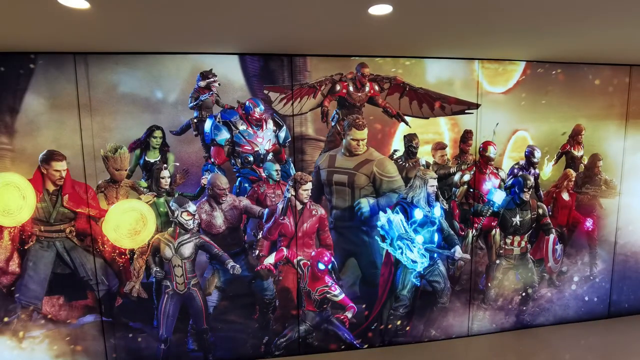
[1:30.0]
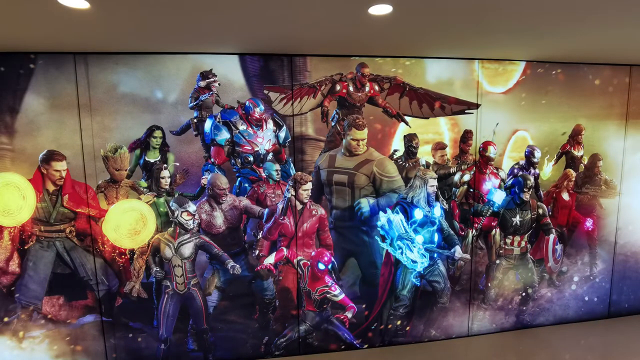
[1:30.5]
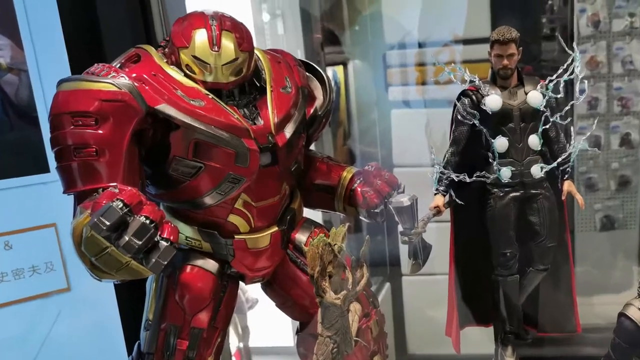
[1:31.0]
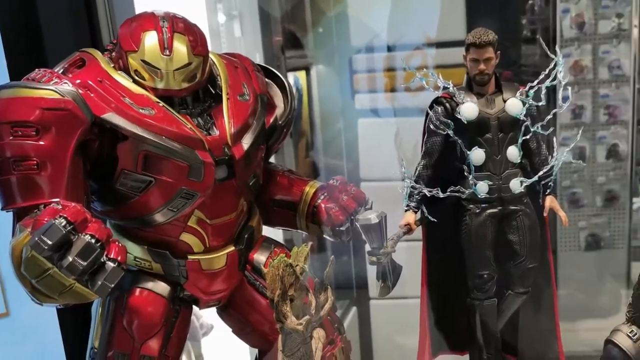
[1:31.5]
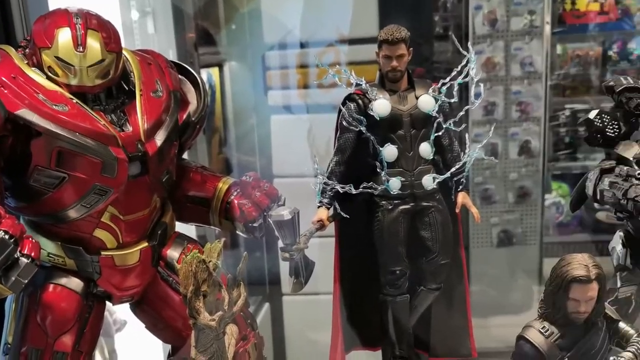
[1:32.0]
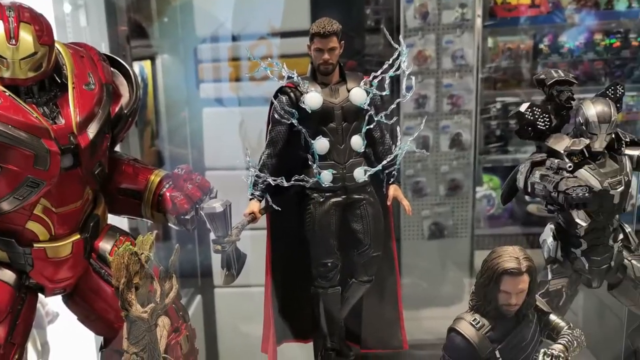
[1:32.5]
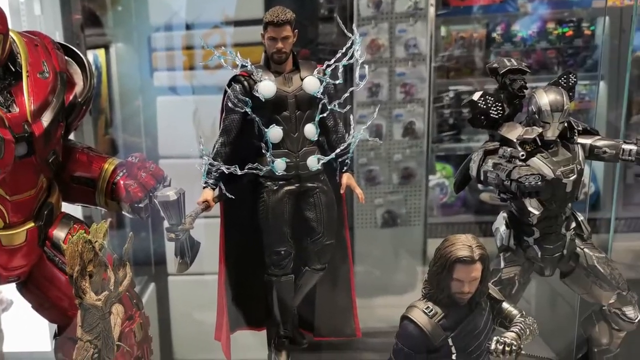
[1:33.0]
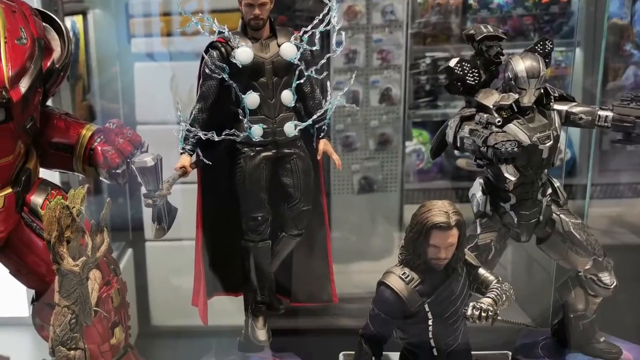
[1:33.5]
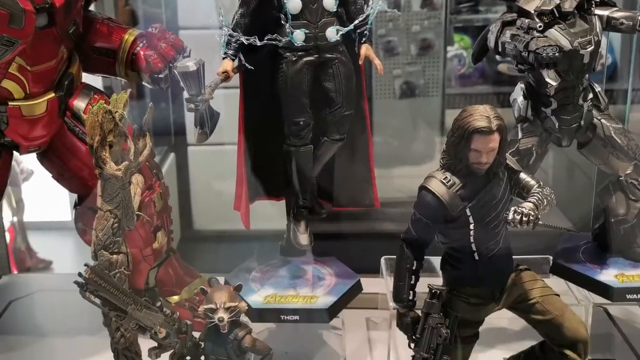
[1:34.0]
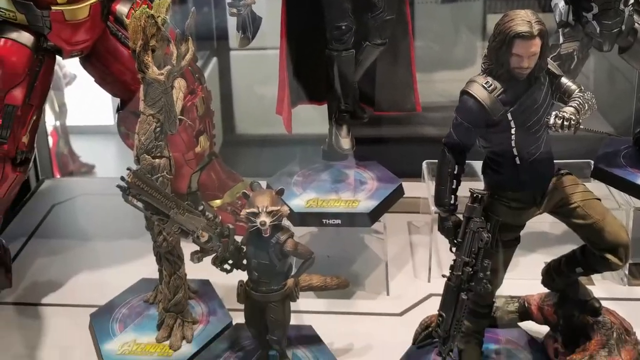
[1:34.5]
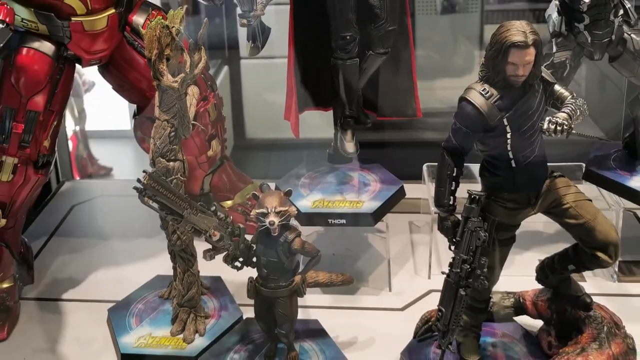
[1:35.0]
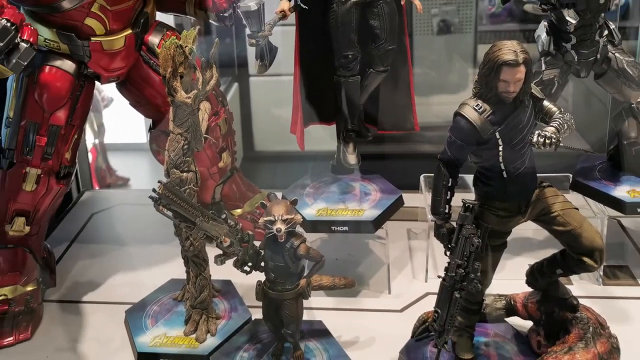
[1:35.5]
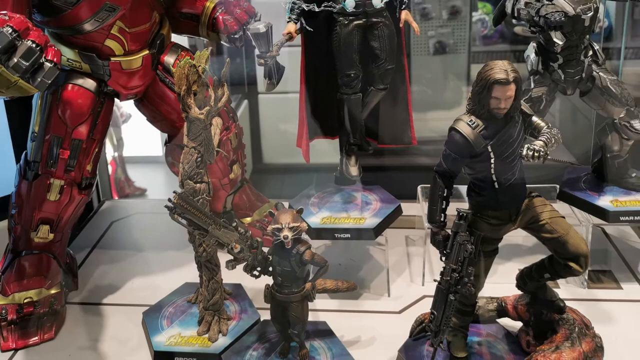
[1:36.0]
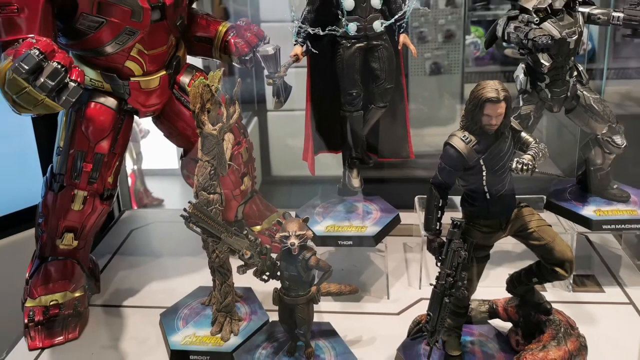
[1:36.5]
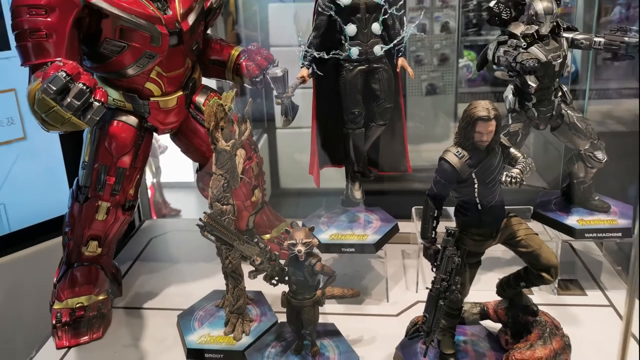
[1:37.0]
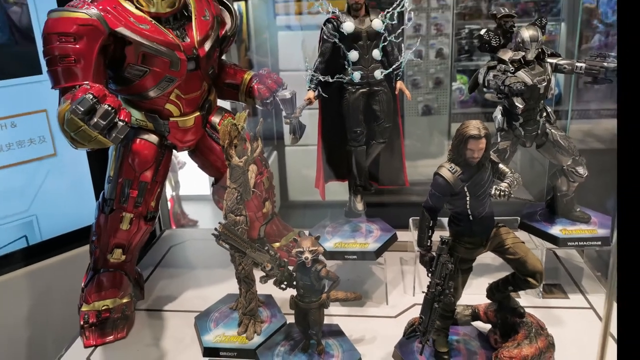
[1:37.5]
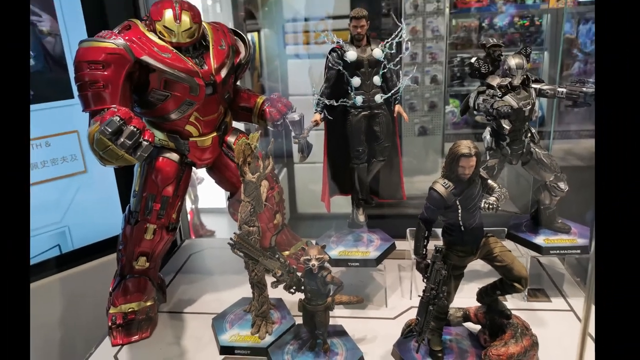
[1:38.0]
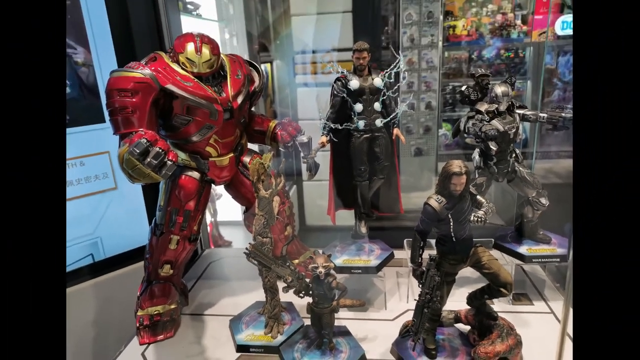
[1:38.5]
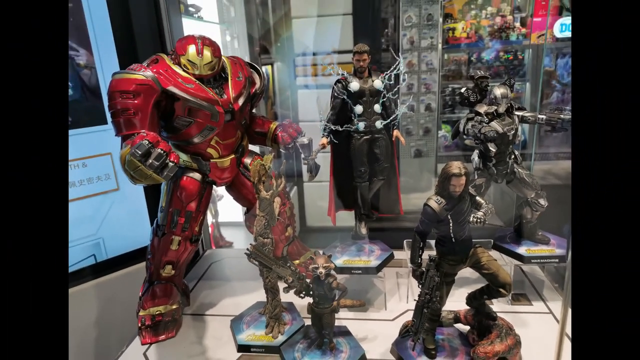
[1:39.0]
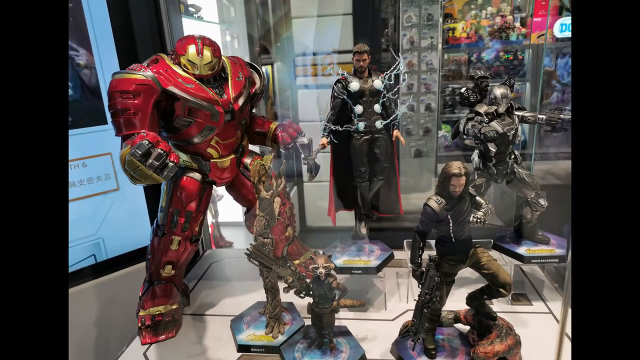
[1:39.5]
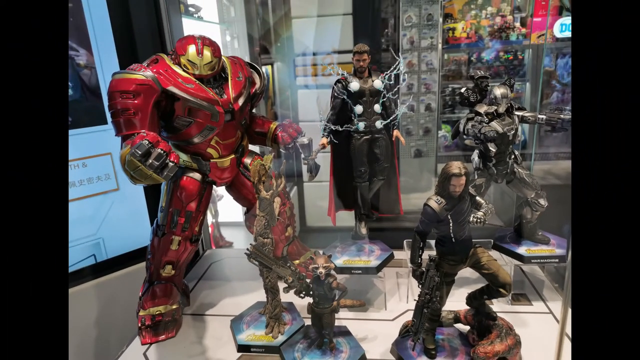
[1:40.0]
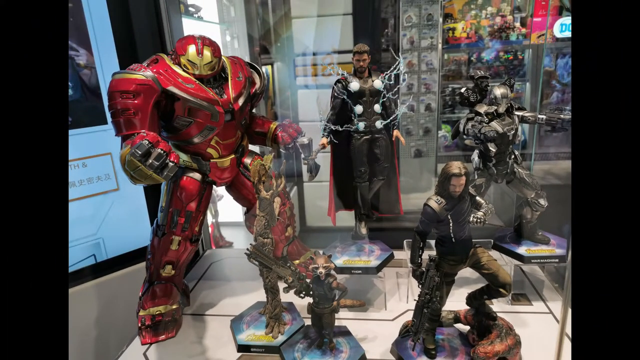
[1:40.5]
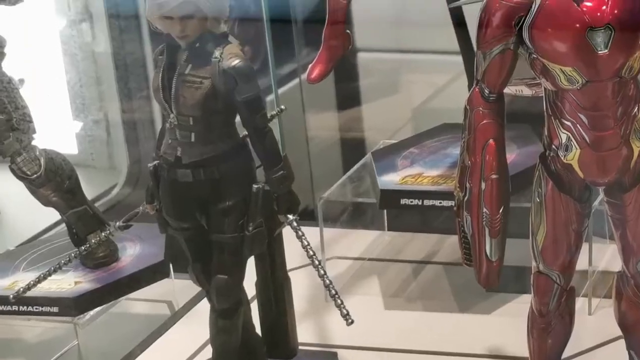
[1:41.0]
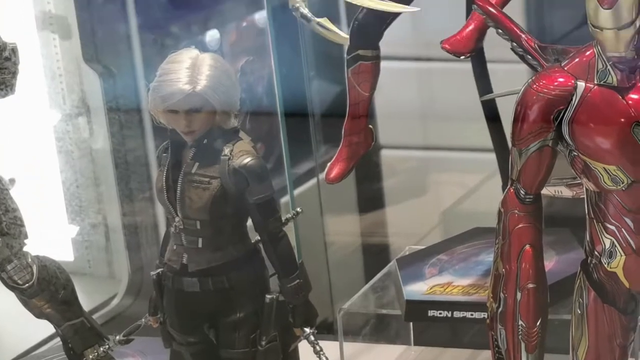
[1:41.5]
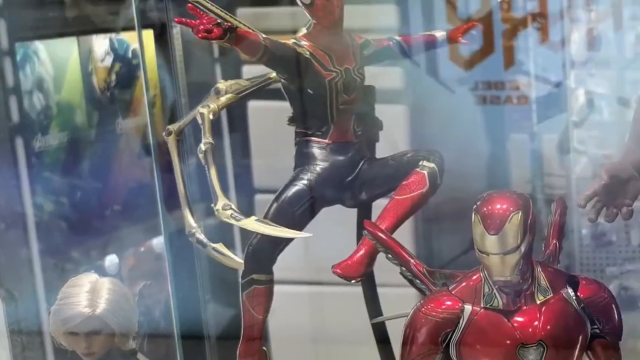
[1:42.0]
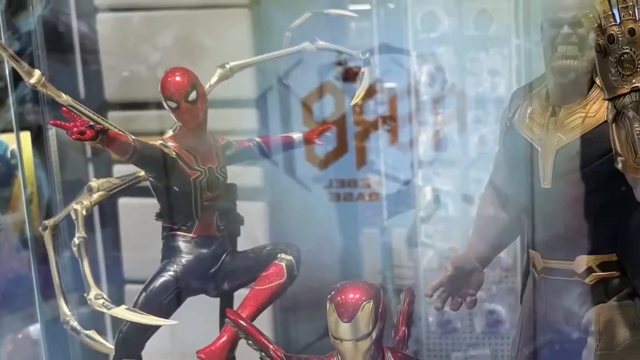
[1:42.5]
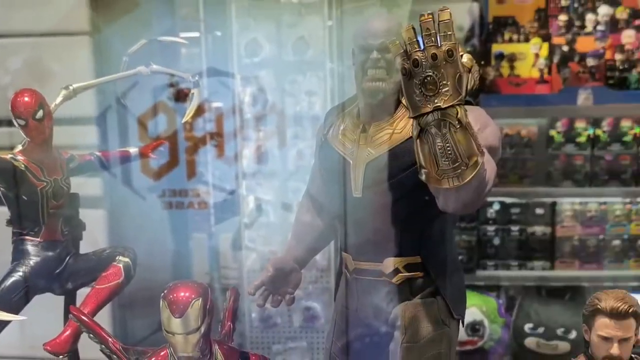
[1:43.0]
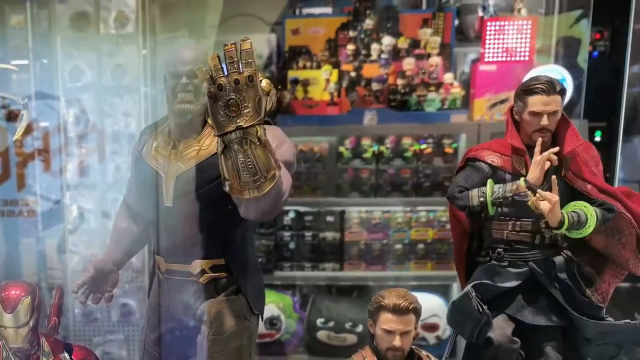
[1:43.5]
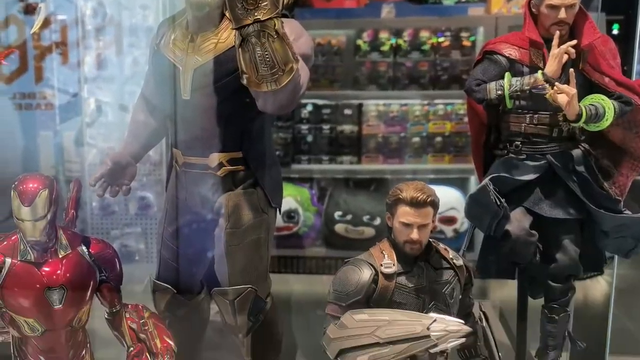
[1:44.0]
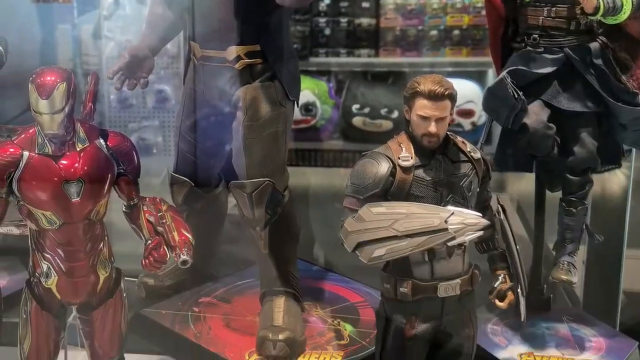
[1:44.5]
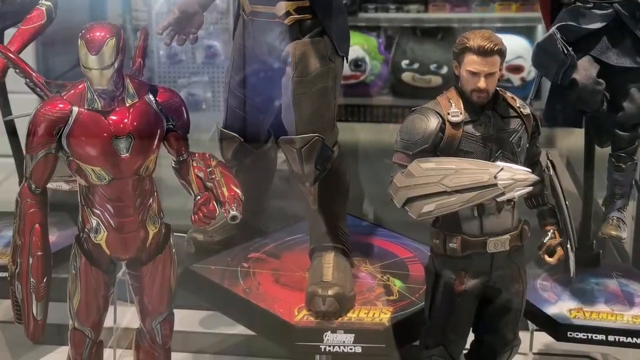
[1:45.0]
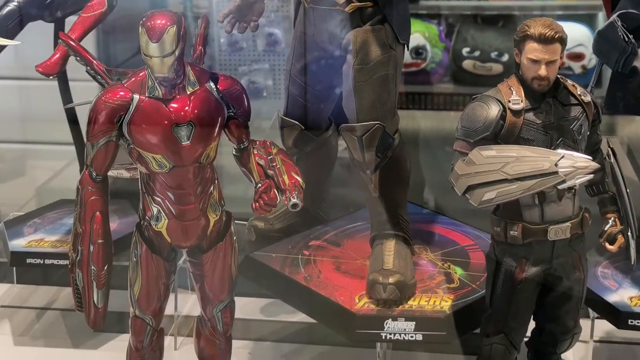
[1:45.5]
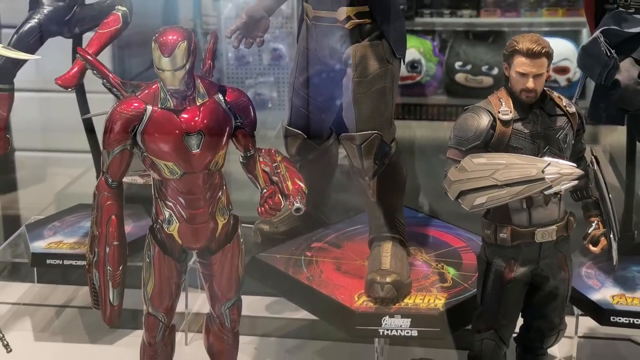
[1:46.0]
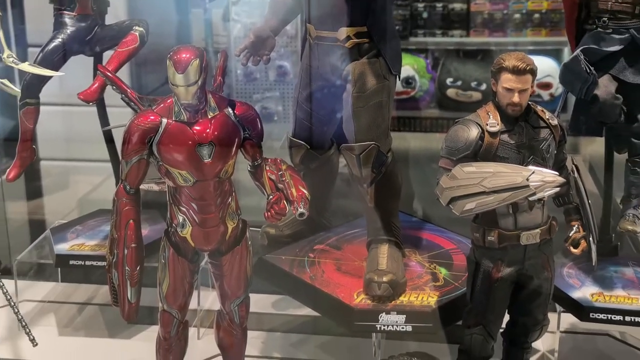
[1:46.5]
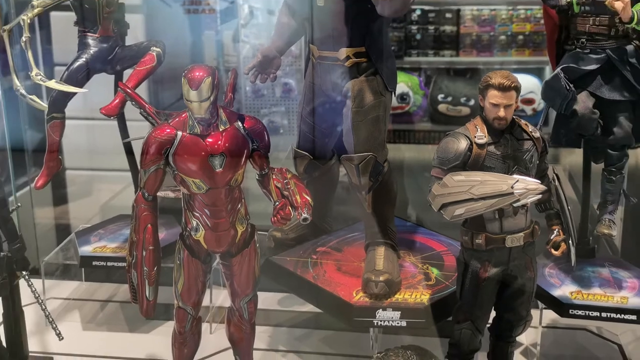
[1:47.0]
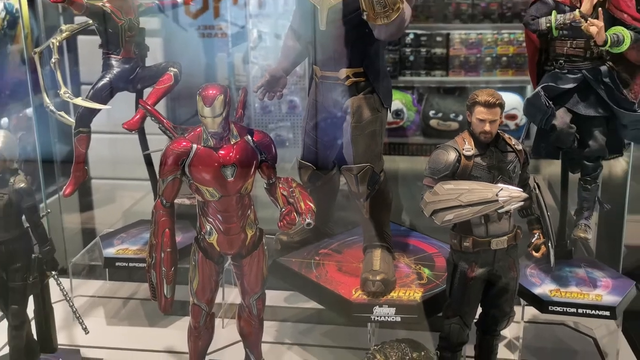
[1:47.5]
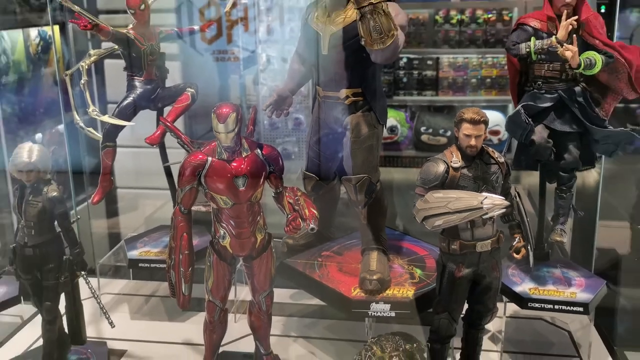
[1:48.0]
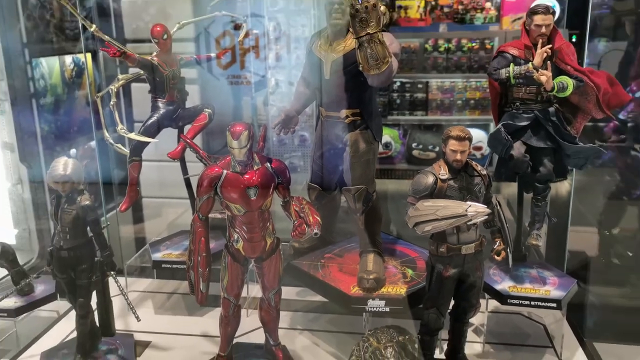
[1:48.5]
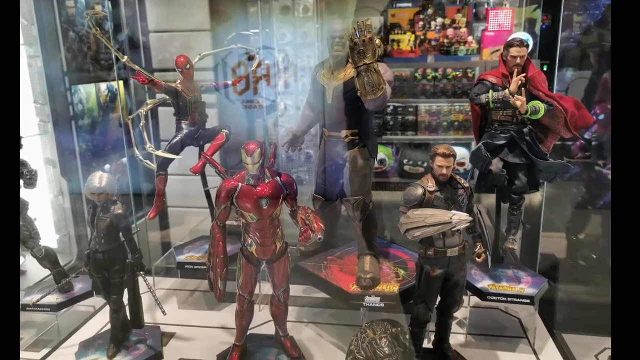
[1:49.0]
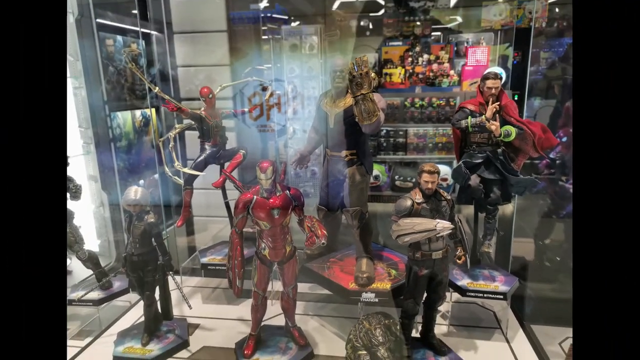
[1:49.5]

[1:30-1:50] Photos show figures inside a glass display case, including Avengers Infinity War figures such as some big Iron Man armor, Thor, War Machine, Groot and Rocket, as well as the Winter Soldier; they seem to be collectibles. There are also Black Widow, Iron Man, Spider-Man in his Iron Spider suit, Thanos from the Infinity Gauntlet, Doctor Strange, and Captain America from Infinity War. The video pans across the photo, showing off each figure and zooming in and out.